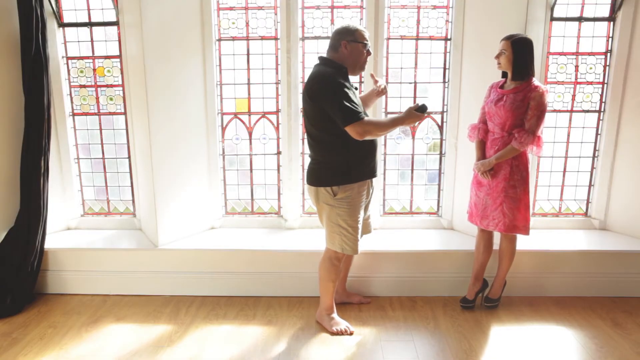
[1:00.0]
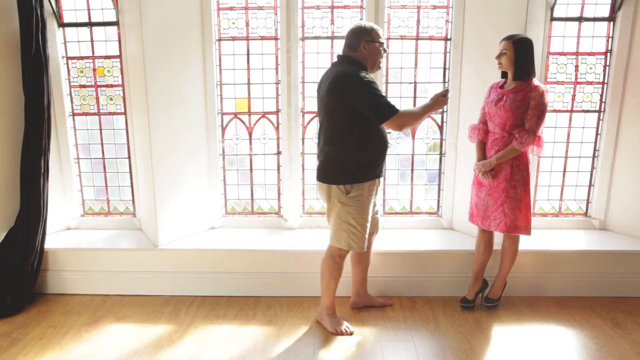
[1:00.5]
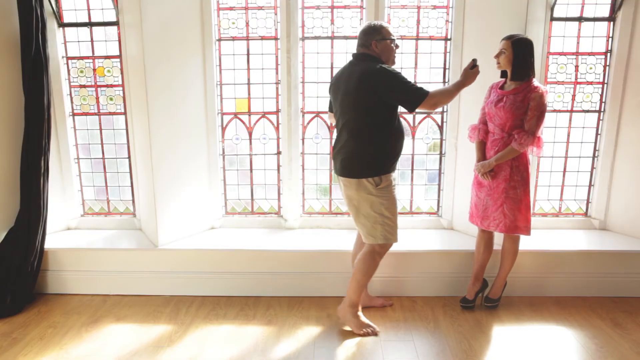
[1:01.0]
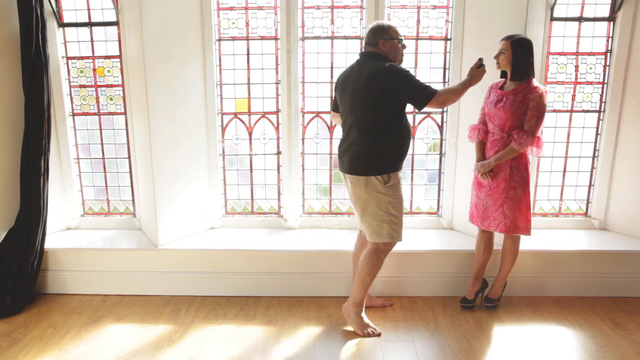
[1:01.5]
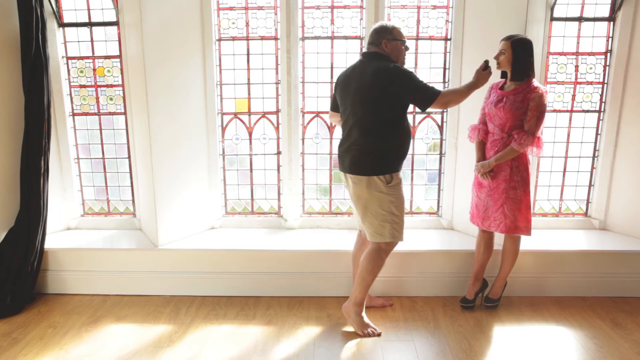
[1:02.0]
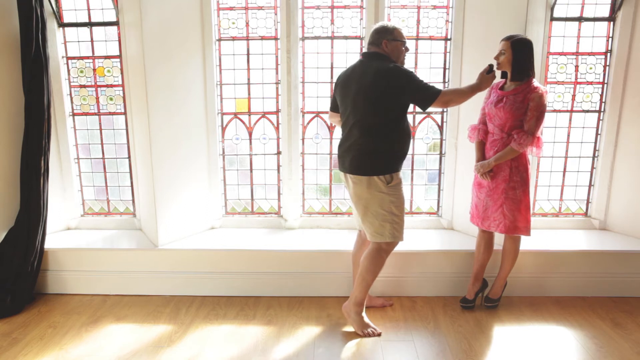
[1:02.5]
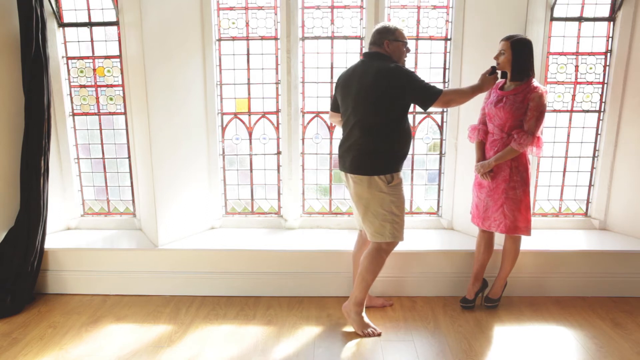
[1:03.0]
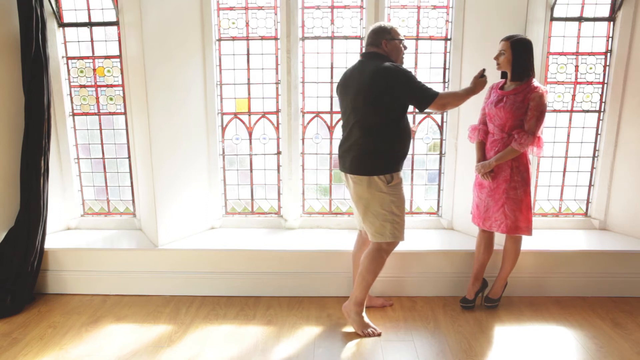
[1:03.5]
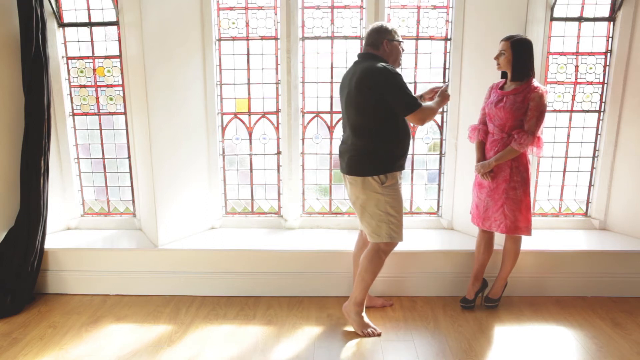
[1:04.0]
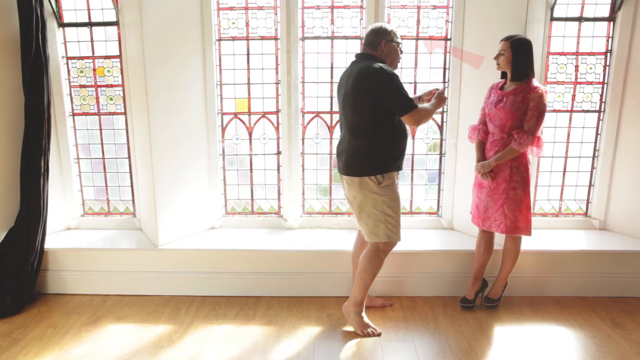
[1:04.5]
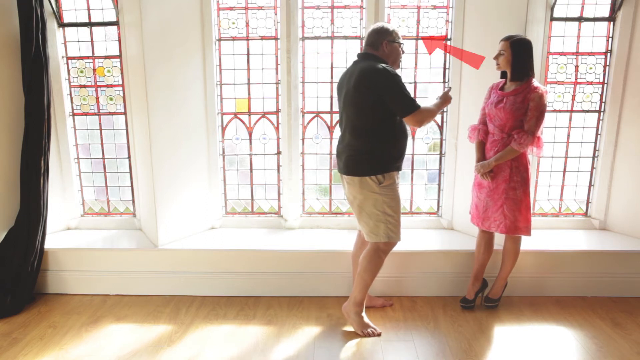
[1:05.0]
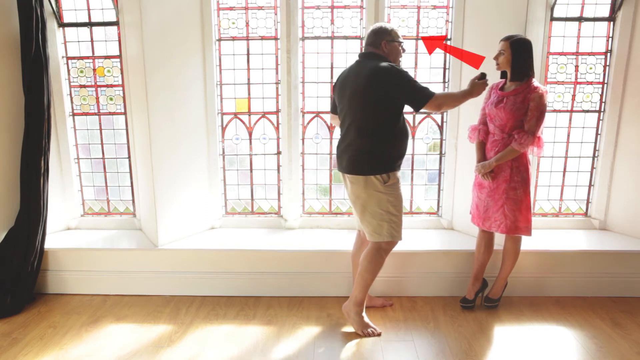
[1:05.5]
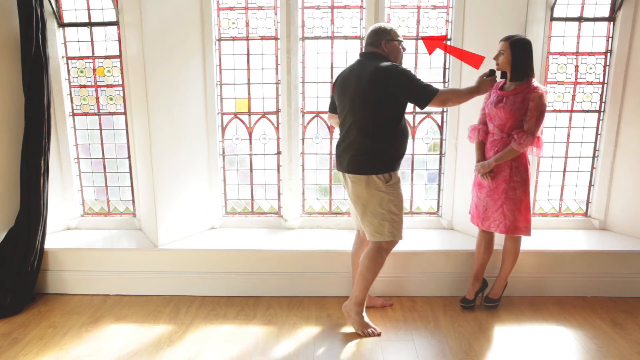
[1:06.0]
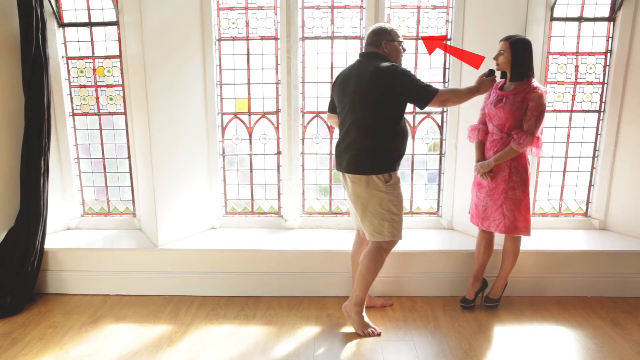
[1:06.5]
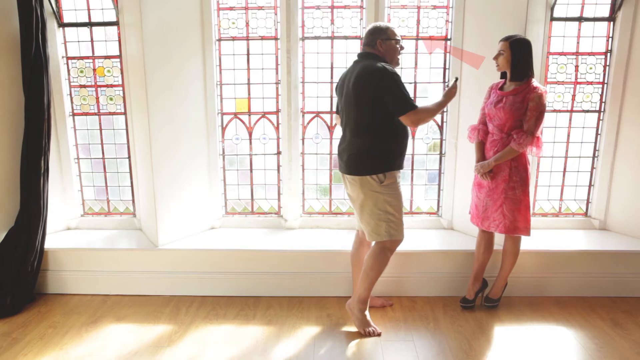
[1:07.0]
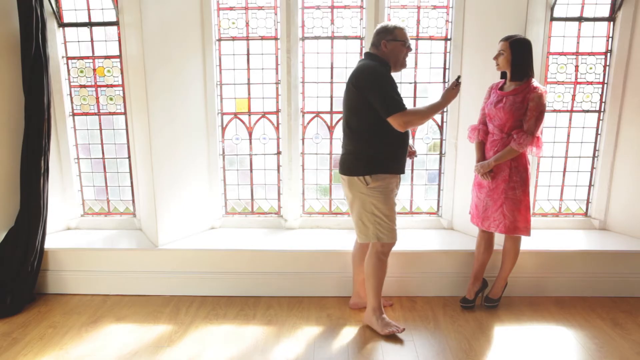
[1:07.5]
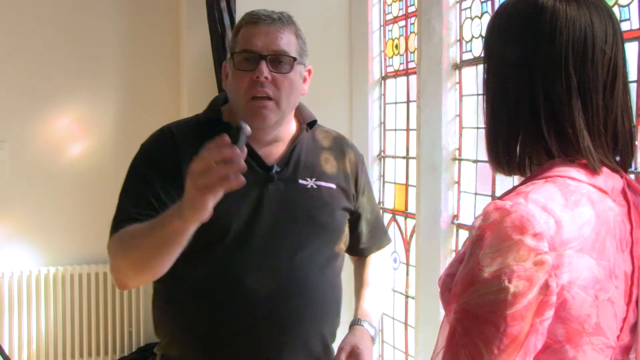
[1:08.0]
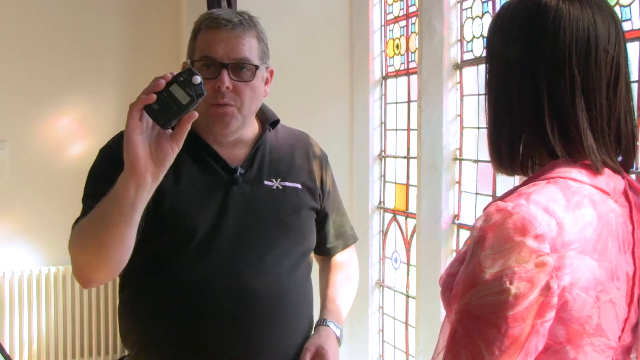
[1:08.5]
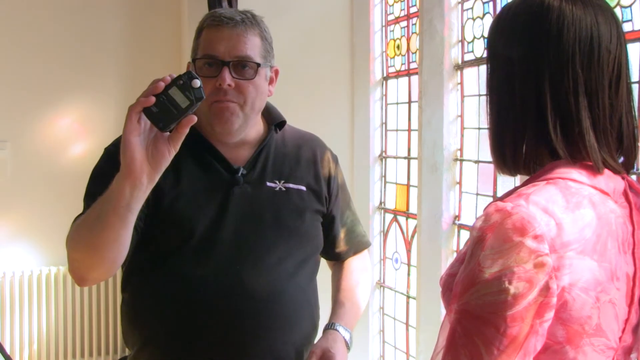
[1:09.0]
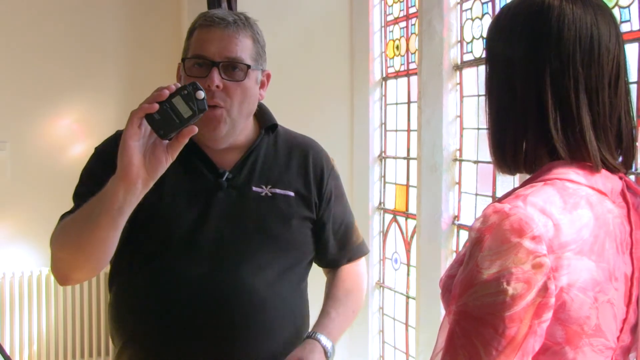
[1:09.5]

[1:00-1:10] The man and the woman are still standing in front of the big stained-glass window. He wears a black polo shirt, khaki shorts and glasses, and is barefoot. The woman, in a bright pink dress and black high heels, stands very quietly, her face showing very few emotions. The man puts the device in her face as he keeps talking about it. A red arrow appears pointing toward the stained-glass window and disappears after only a couple of seconds. The camera angle then changes to over the woman's shoulder, showing the man standing there with the device in his hand, talking animatedly and excitedly about it. He puts it closer to the camera so it can be seen more clearly, getting closer to the camera as he continues.